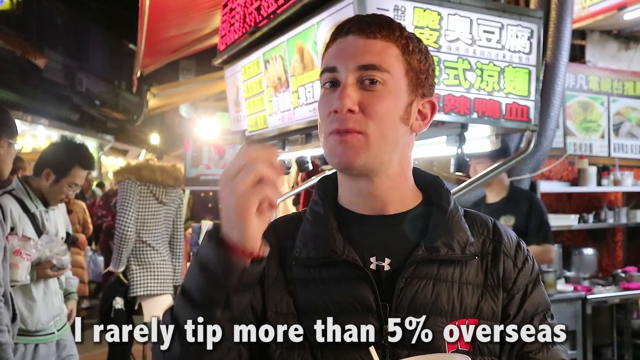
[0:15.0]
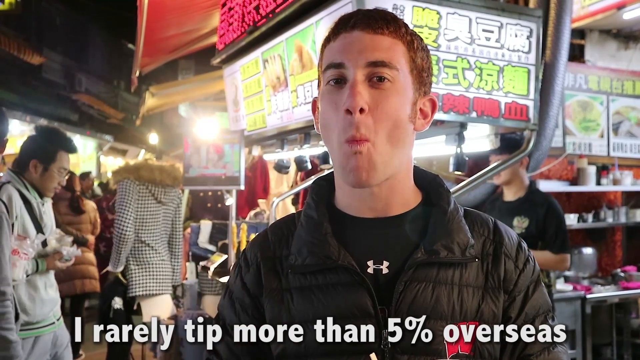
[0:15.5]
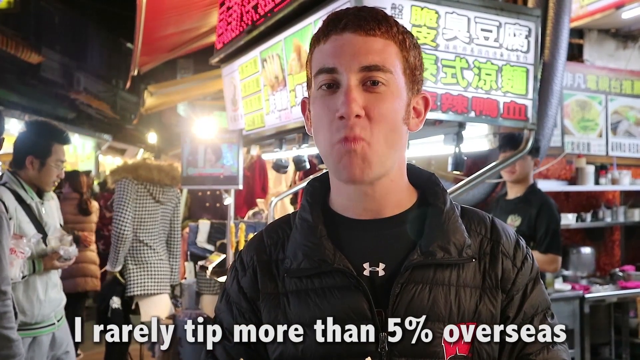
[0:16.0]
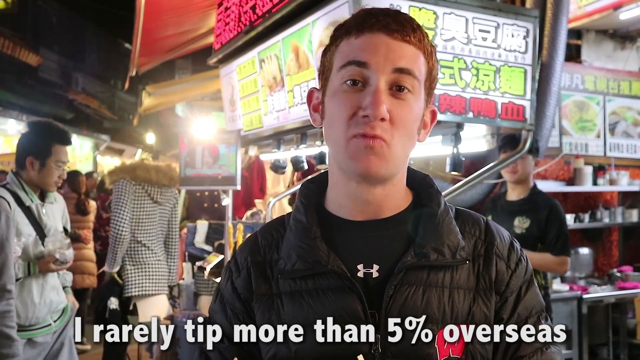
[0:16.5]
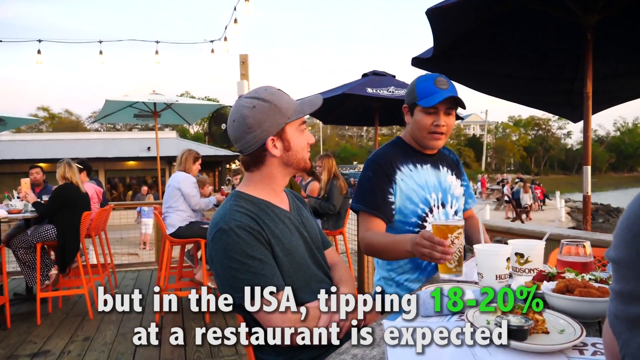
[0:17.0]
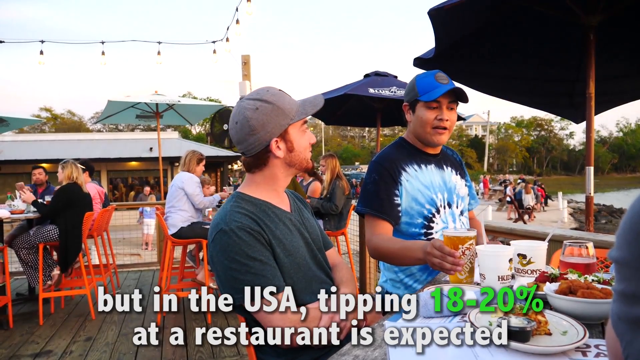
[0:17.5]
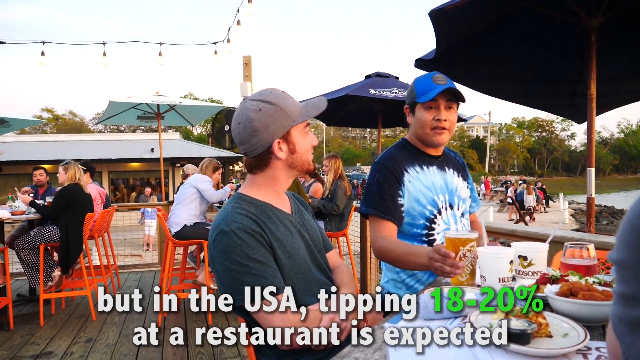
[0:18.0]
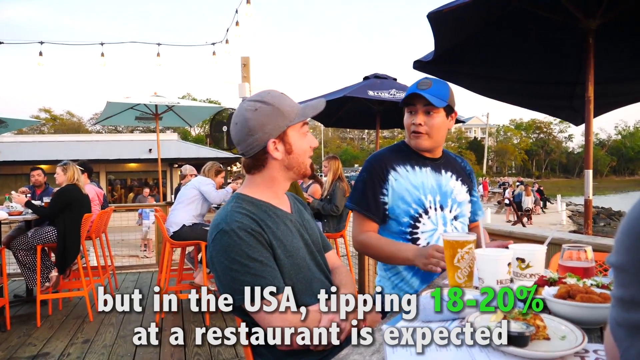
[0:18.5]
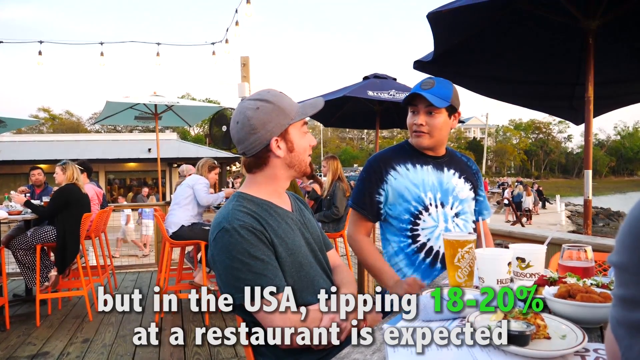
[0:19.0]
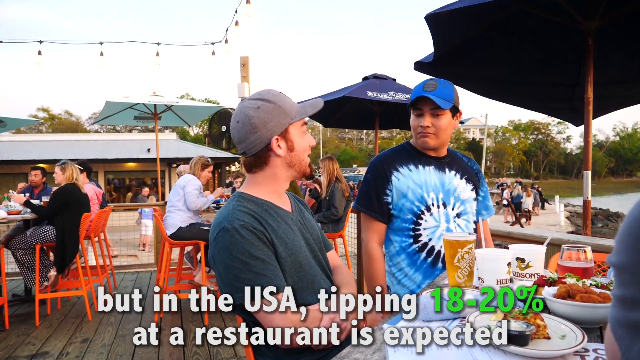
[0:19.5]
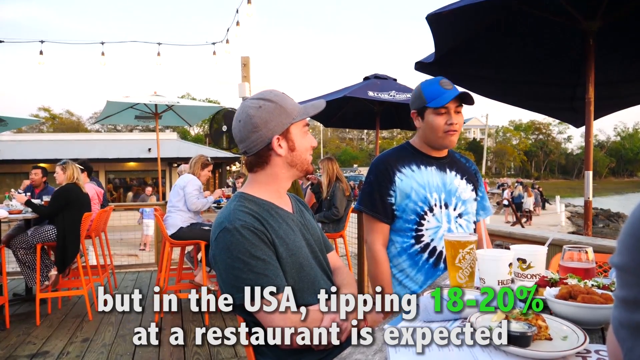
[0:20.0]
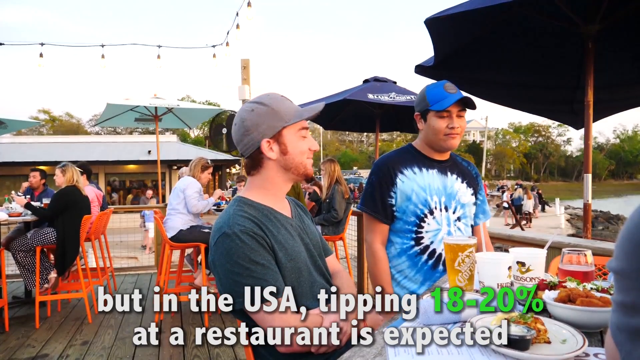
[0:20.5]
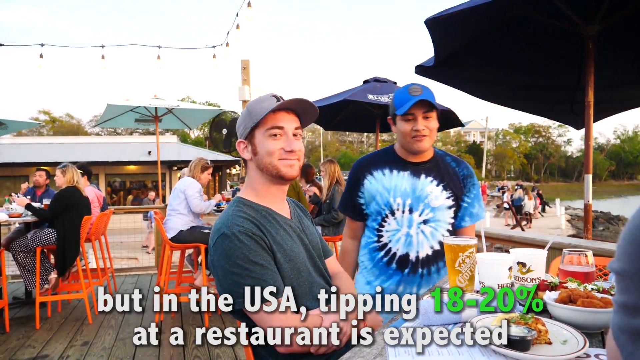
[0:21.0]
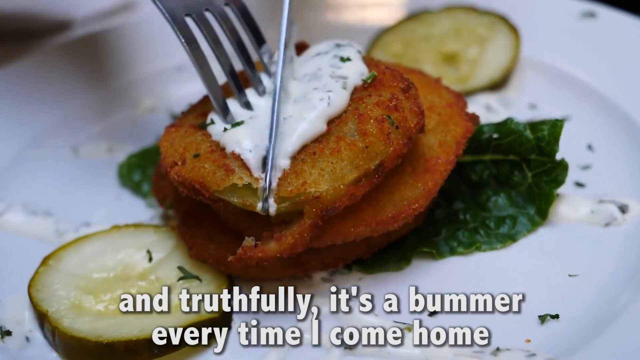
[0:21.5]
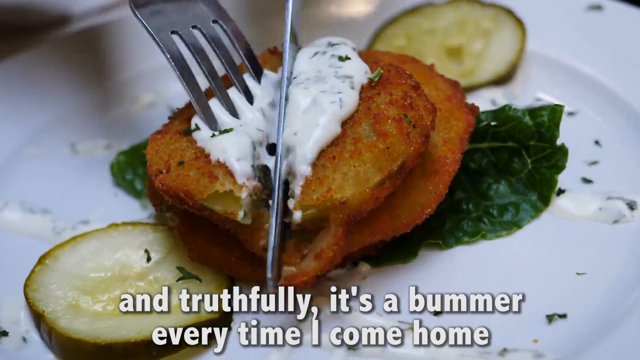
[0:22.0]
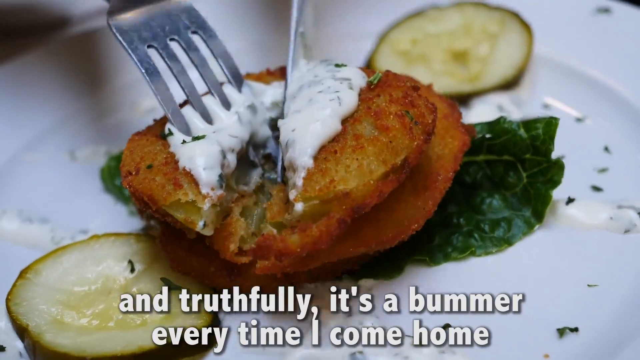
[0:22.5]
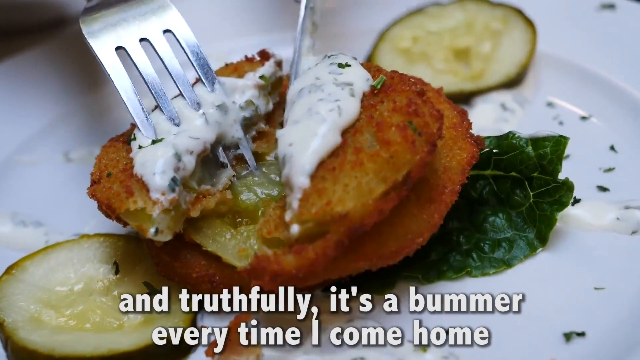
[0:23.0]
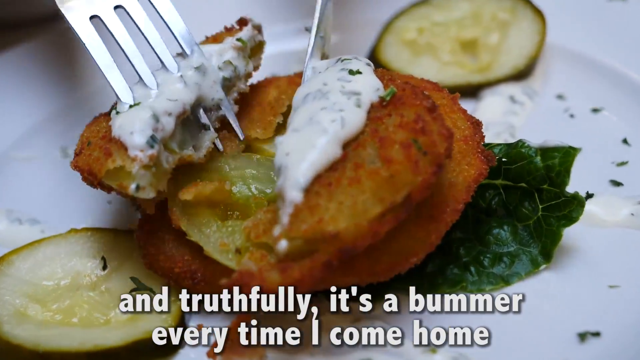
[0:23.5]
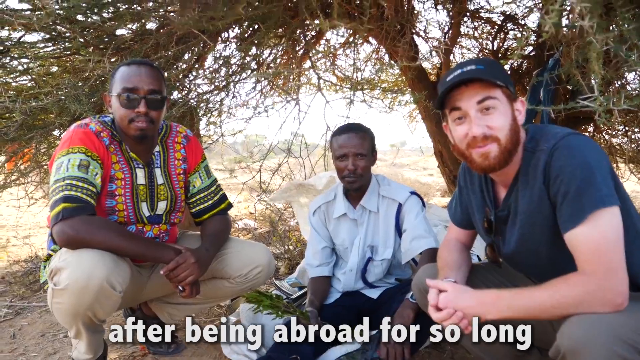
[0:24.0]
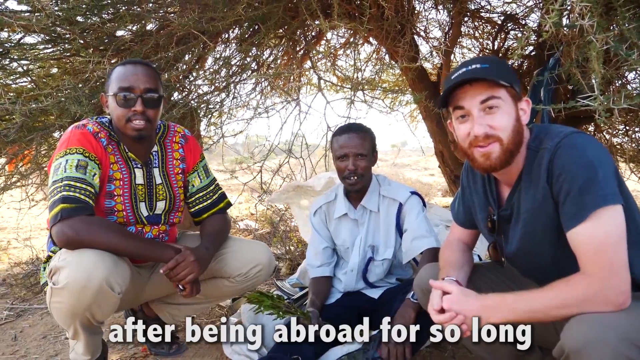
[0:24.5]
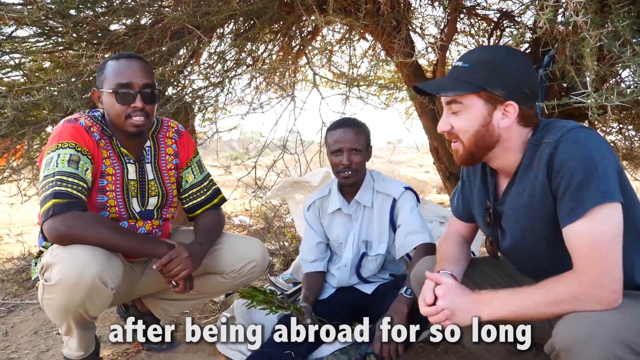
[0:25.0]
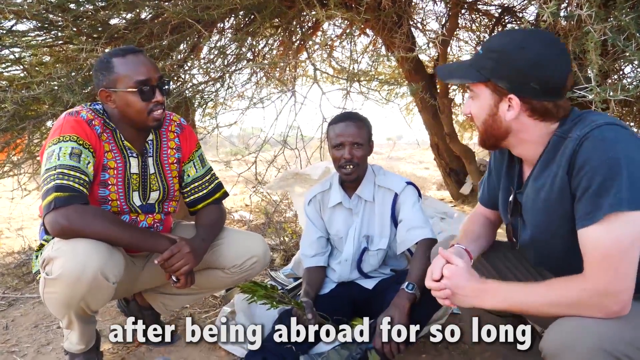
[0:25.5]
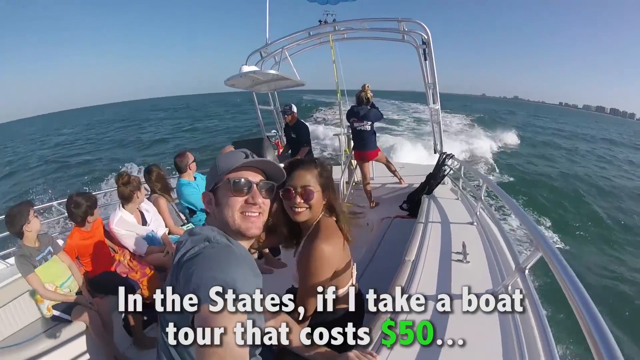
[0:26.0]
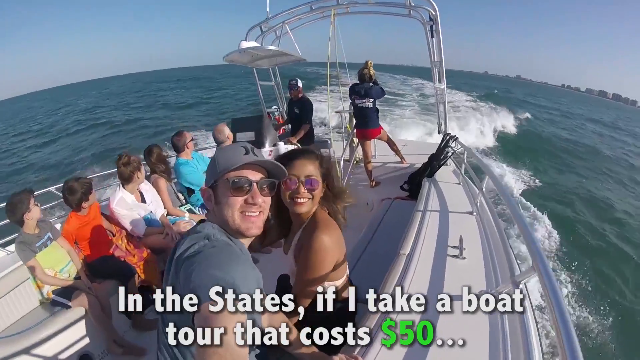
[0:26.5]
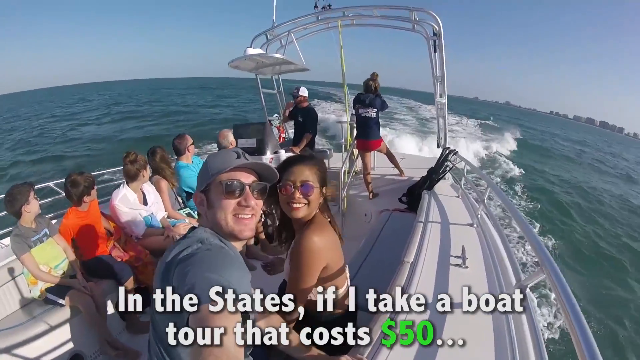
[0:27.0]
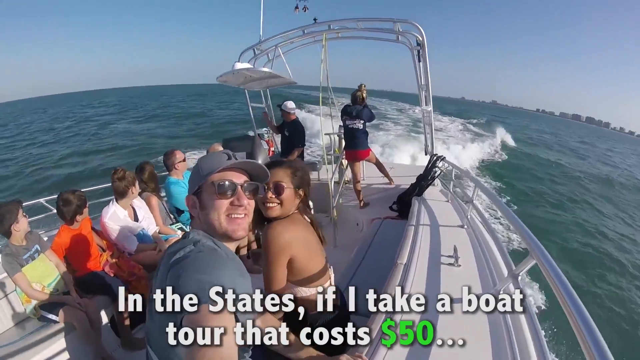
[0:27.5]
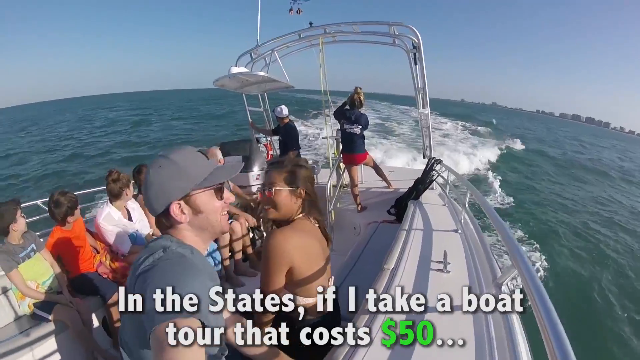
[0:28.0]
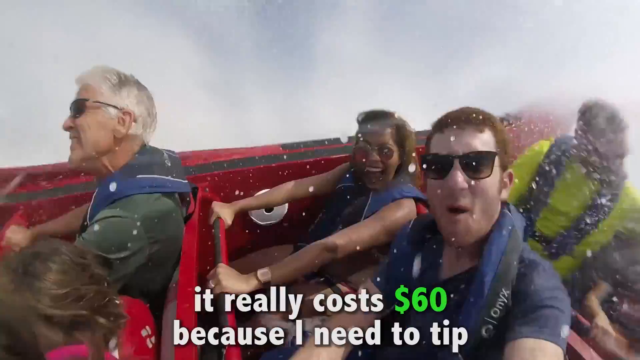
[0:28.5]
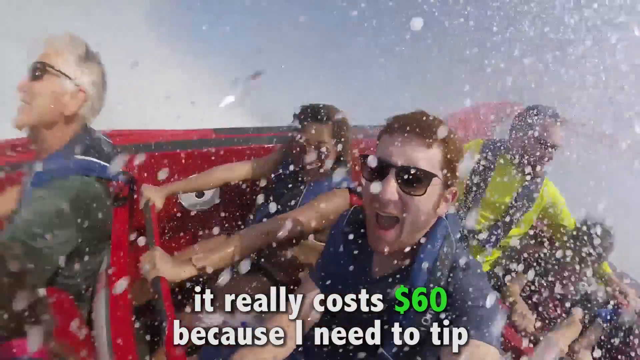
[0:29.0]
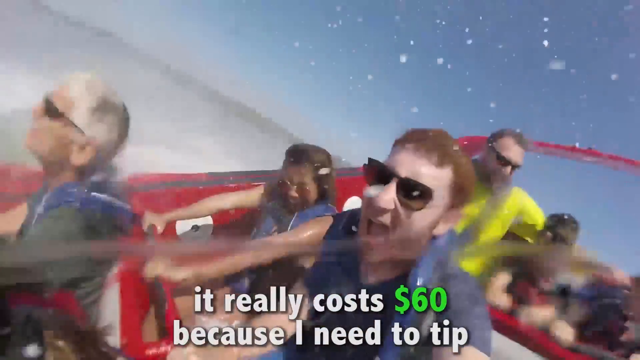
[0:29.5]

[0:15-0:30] The same man continues eating out on the streets, in a city with what look like Japanese letters above him, talking and eating from a bowl with chopsticks. He appears in other settings too: sitting at an outdoor market-like table having a beer and talking to a man, then cutting into a brown, breaded patty-like food with a leafy object on the plate. He seems to be conversing with the man who brought him the beer and is about to eat the patty, which has a little white sauce on it, with some pickles on the side, on a white plate. The setting is an outdoor patio-like area with umbrellas and other people in the background eating, seemingly sitting on red or orange chairs. The man is then in a desert-like country talking to two African-American men; they are all in a crouching position talking to the camera, apparently in a casual conversation about the region they are from. He seems to be traveling all over, talking to many people. Finally, the man holds what appears to be a GoPro on a white boat moving rapidly across the ocean, with a woman next to him and other people in the background.